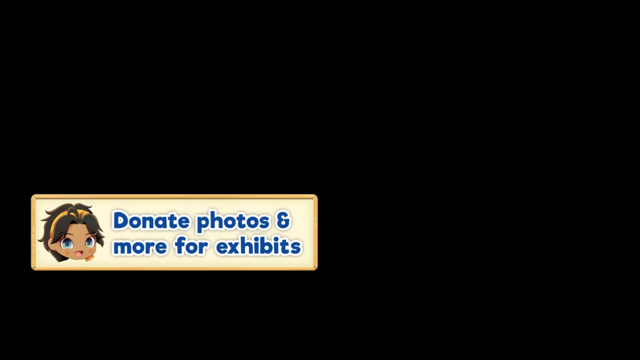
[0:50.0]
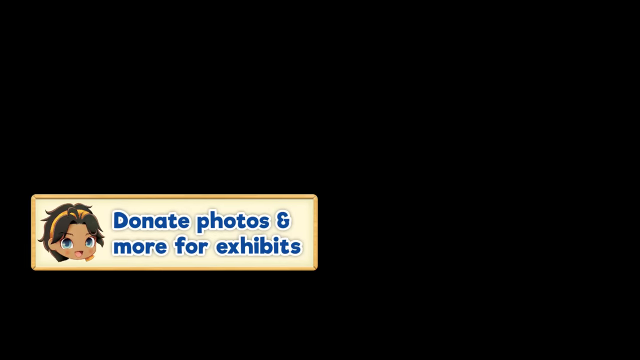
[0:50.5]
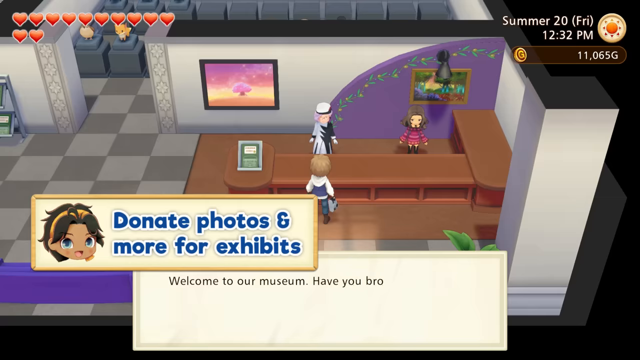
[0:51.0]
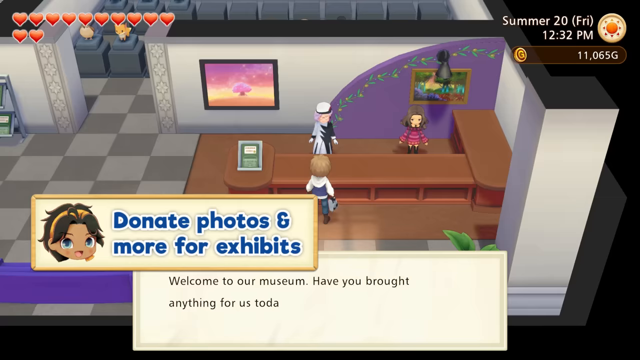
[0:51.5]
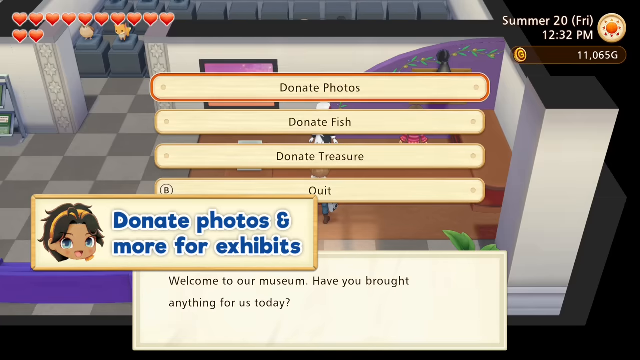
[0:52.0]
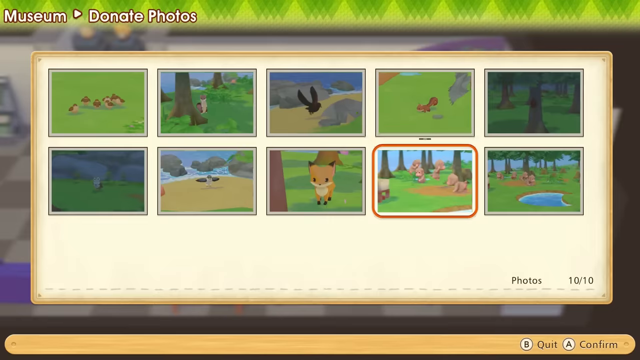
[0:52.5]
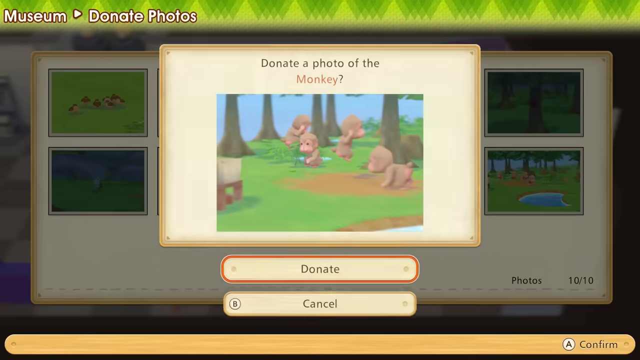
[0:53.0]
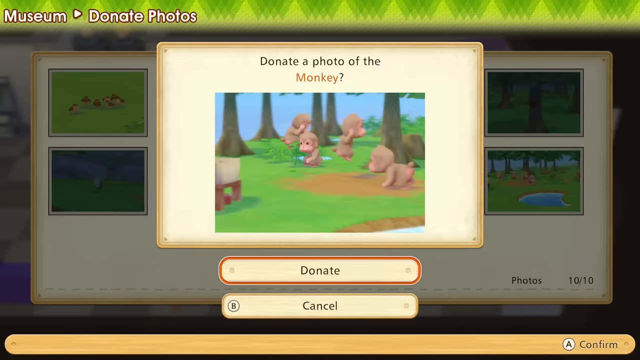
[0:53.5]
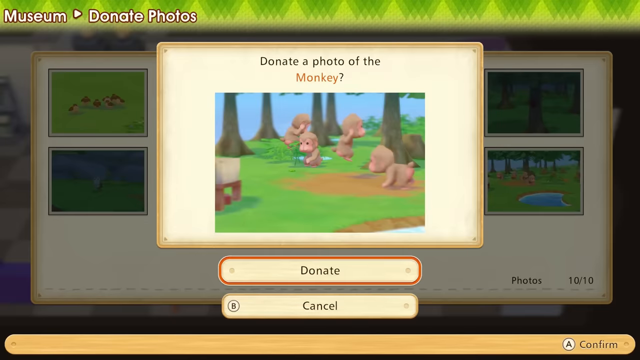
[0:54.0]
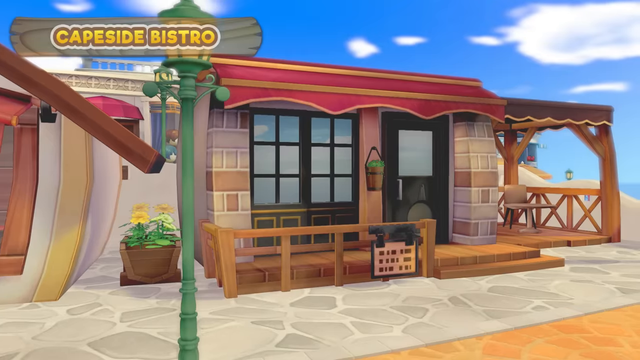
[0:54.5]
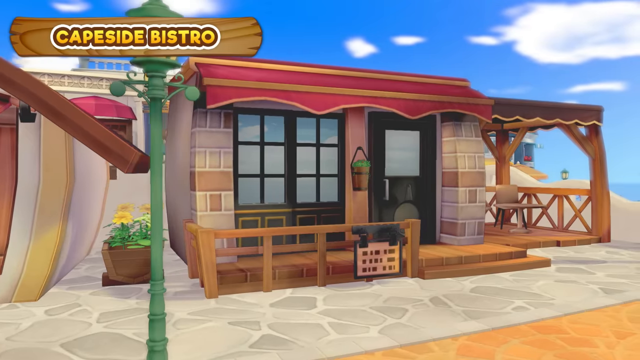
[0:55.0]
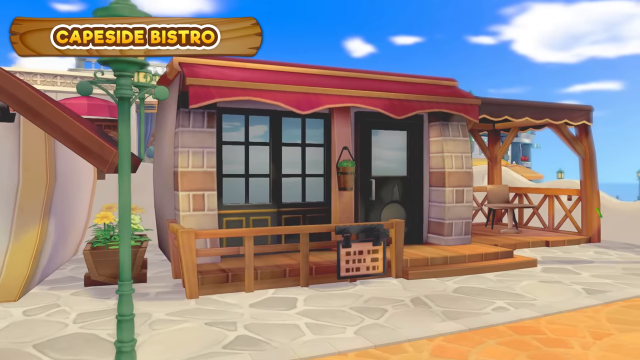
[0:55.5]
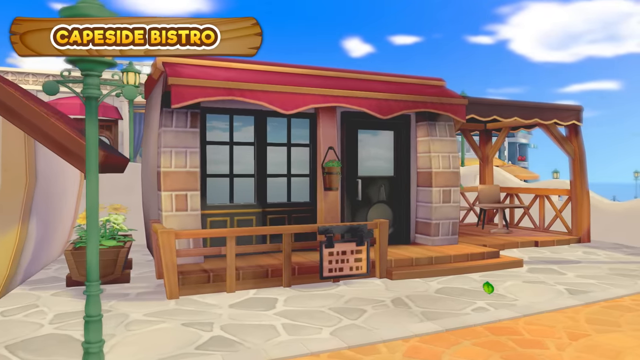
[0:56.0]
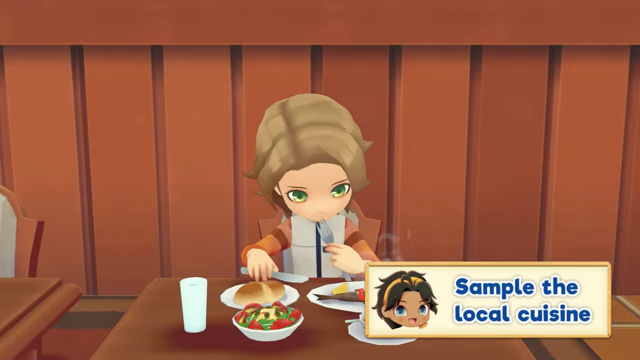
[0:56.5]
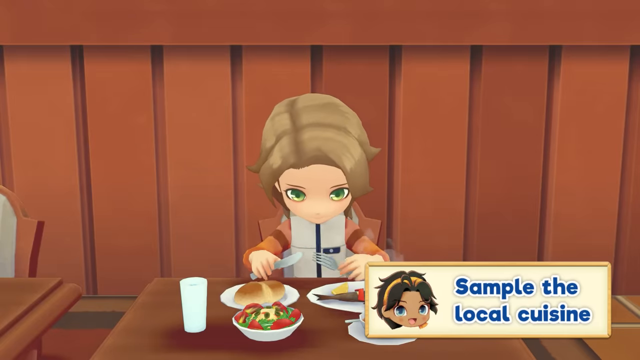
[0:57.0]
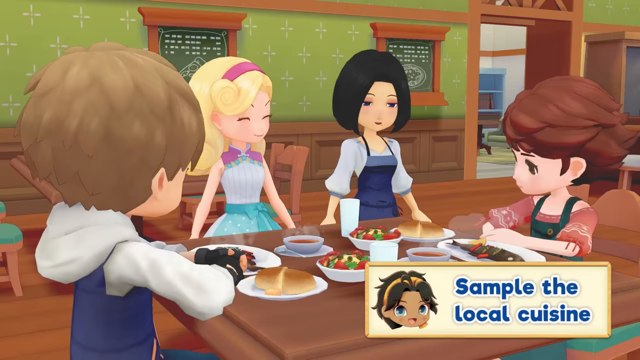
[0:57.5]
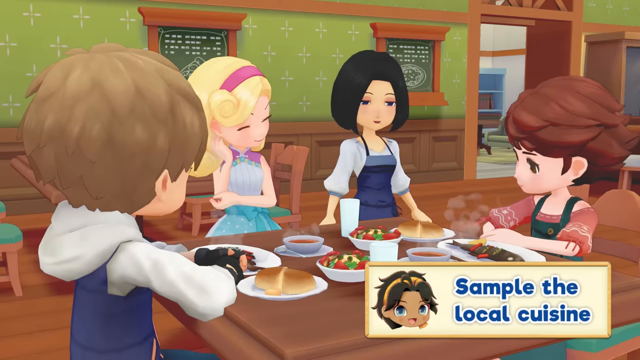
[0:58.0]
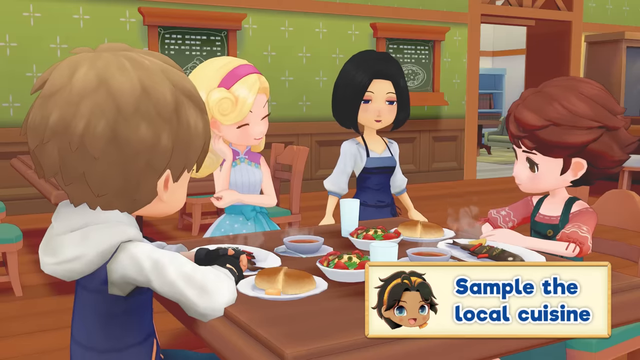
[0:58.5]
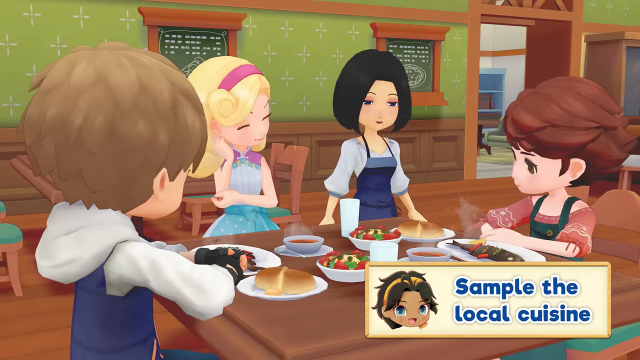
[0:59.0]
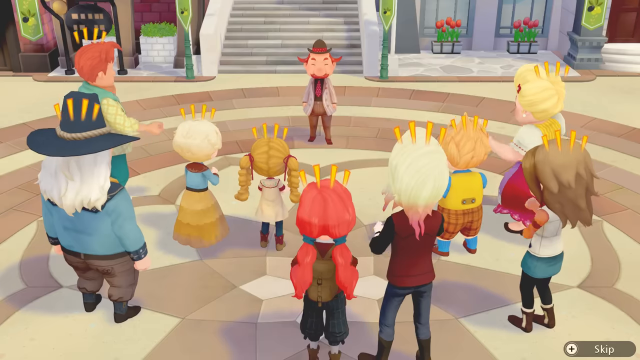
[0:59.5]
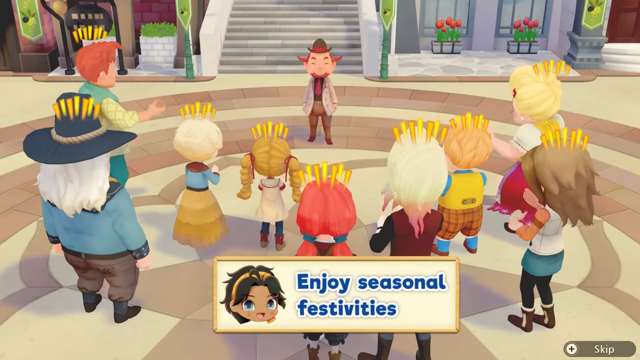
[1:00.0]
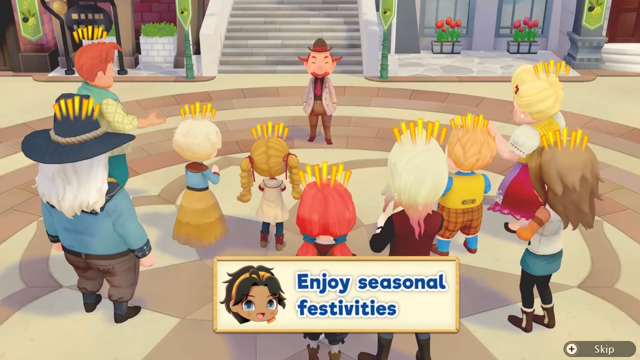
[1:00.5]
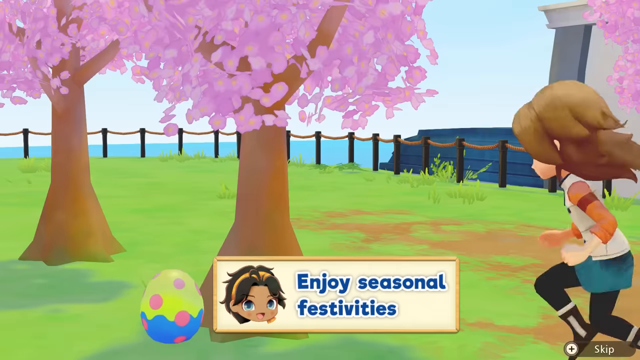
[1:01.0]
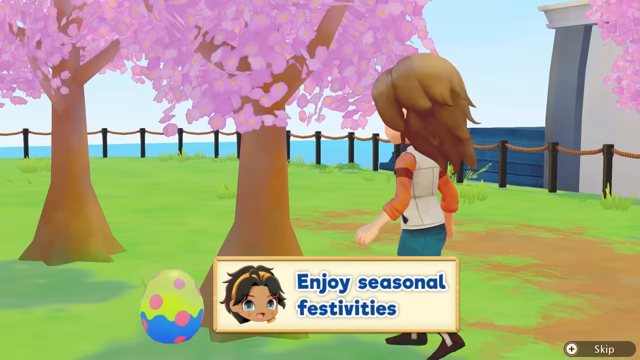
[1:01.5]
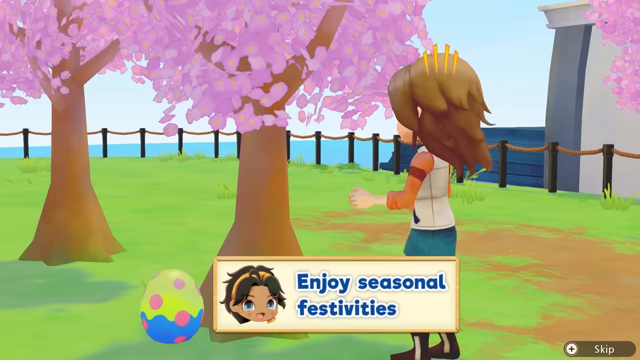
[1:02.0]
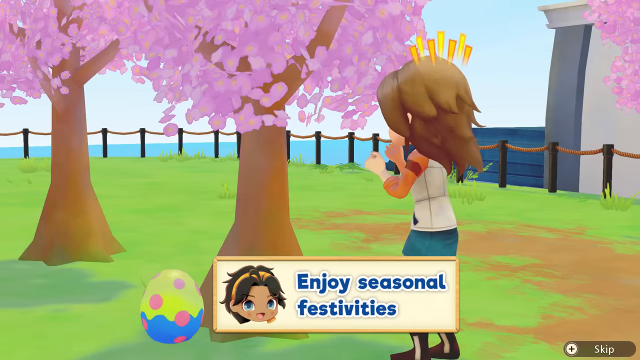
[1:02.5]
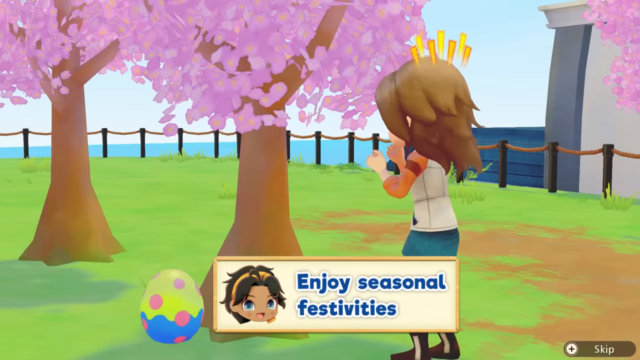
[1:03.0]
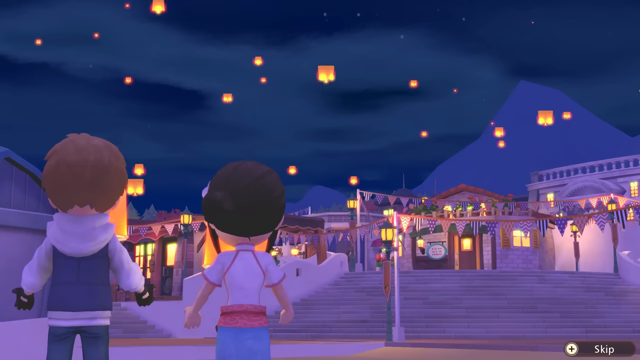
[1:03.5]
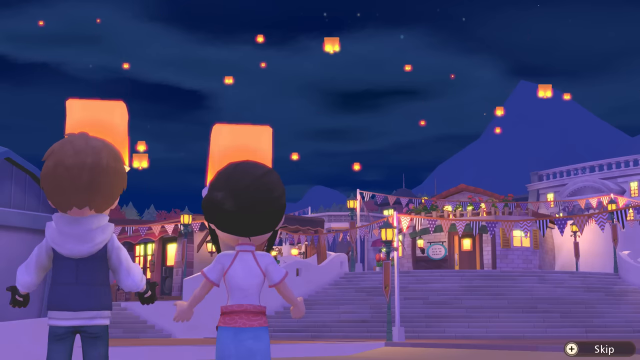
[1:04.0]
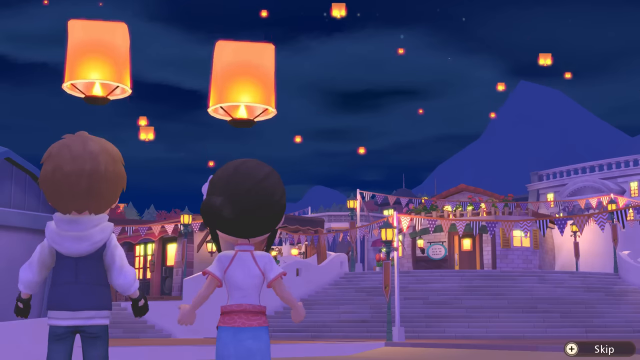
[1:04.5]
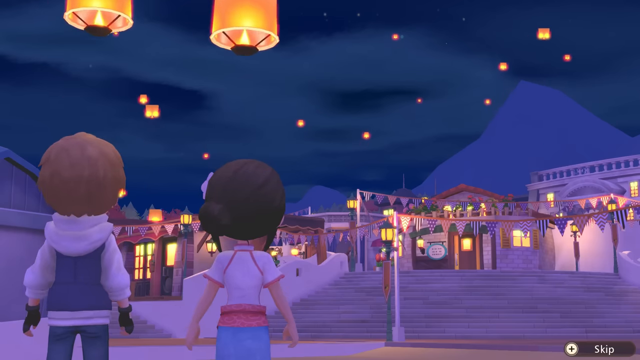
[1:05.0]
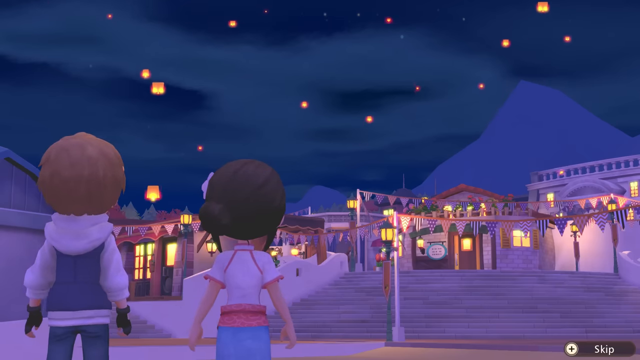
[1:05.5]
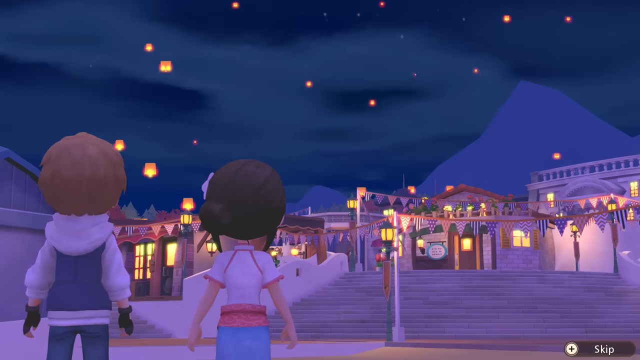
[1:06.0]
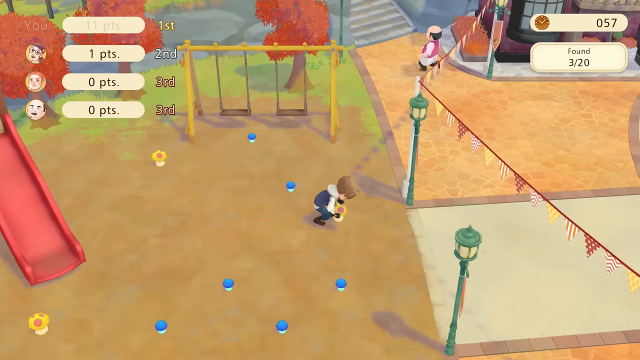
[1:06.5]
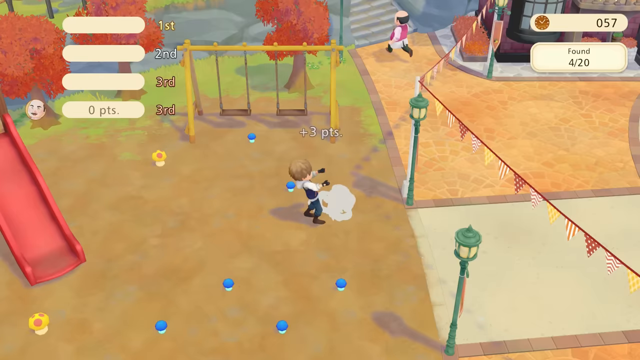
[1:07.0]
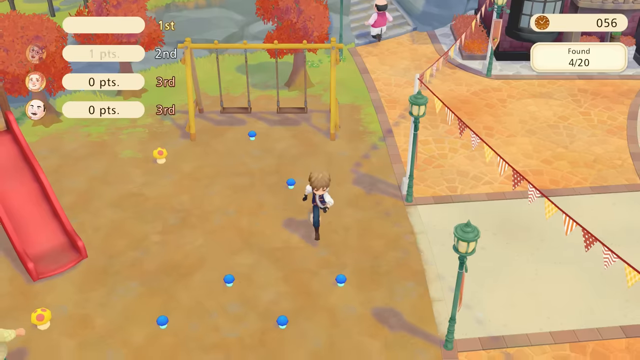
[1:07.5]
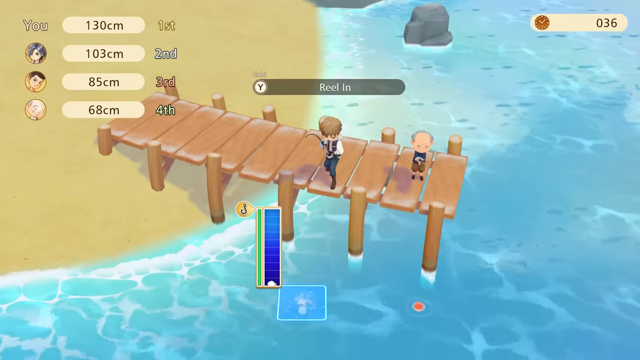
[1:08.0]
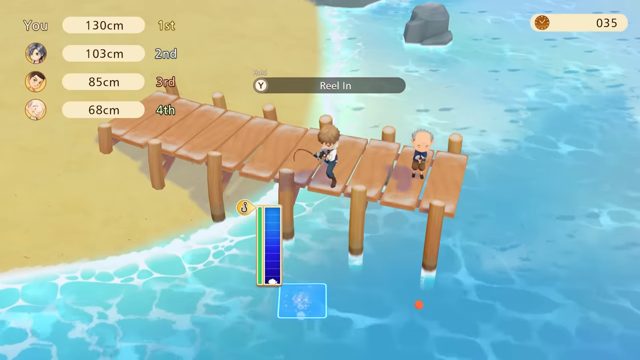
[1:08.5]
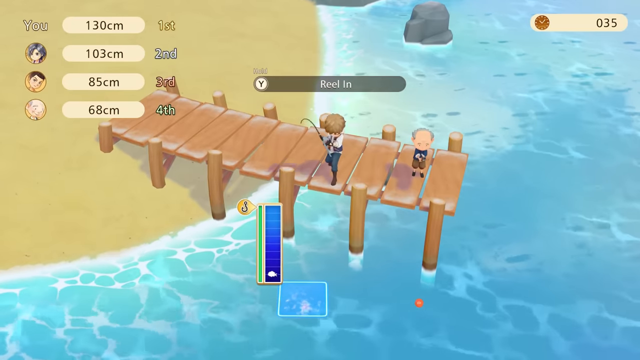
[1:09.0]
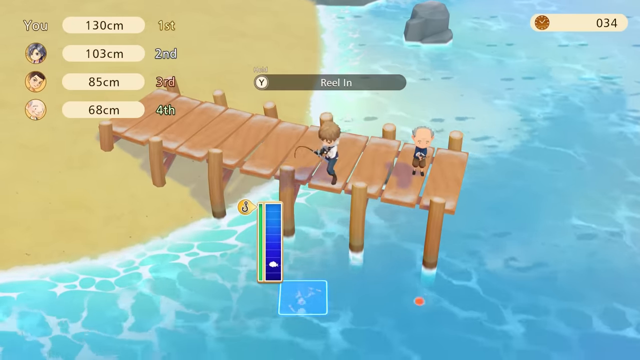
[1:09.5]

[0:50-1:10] A bistro appears, with characters having food. Next come a lantern and fishing, followed by donating photos to the museum, enjoying seasonal festivals, picking up items from the ground, fishing, and apparently some mining.